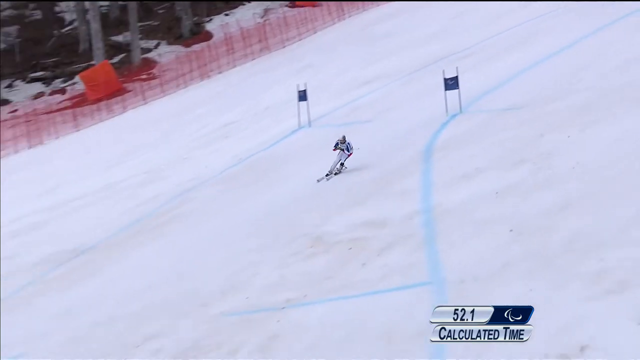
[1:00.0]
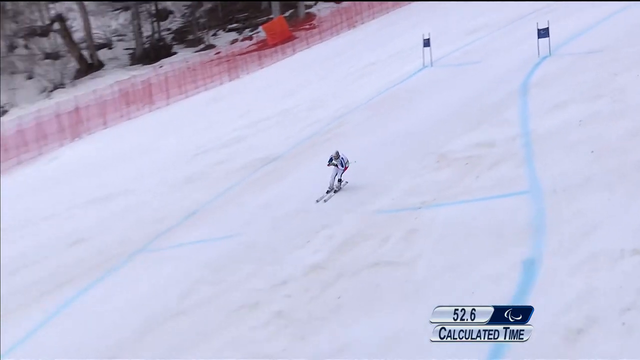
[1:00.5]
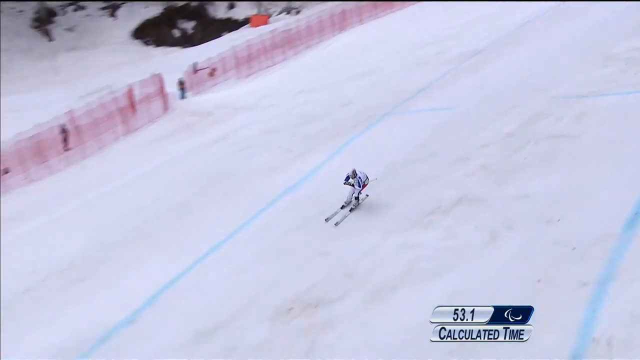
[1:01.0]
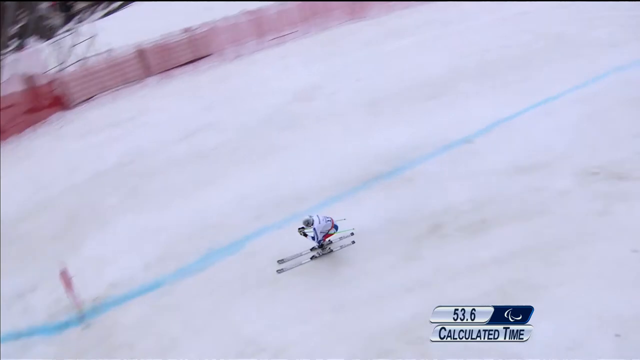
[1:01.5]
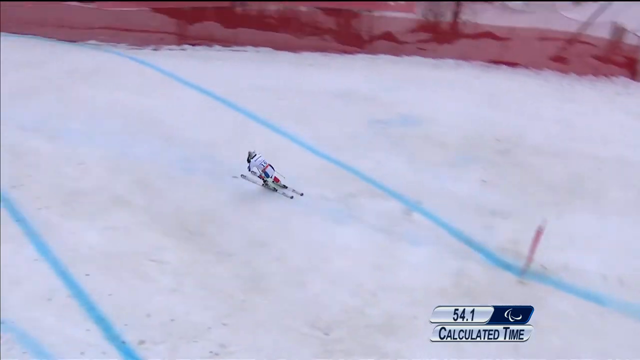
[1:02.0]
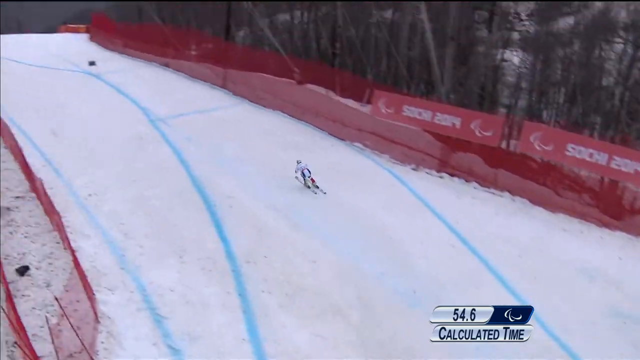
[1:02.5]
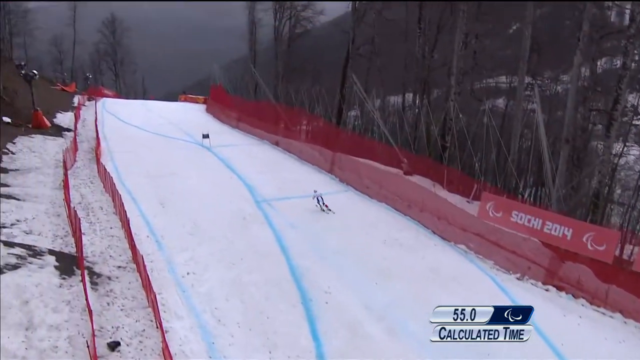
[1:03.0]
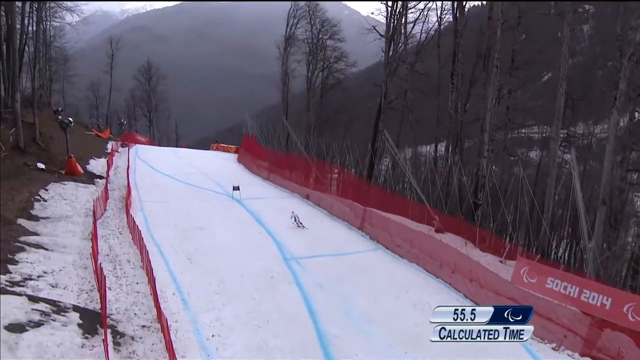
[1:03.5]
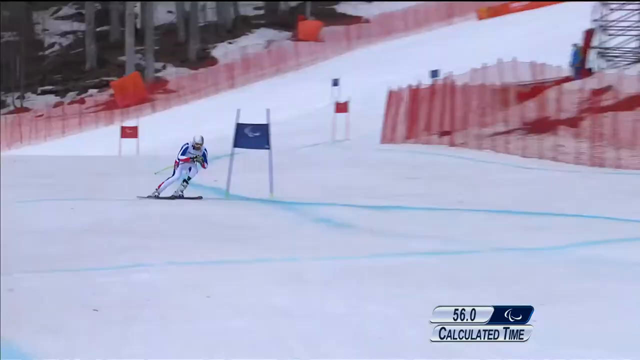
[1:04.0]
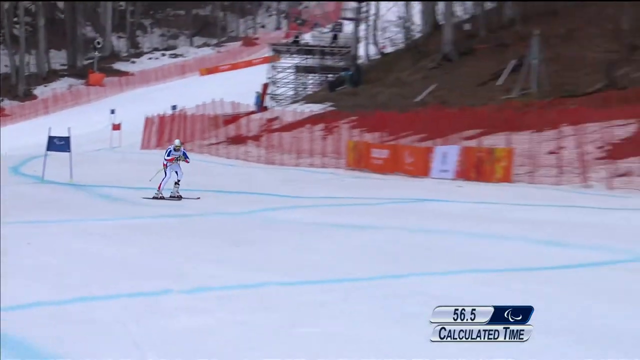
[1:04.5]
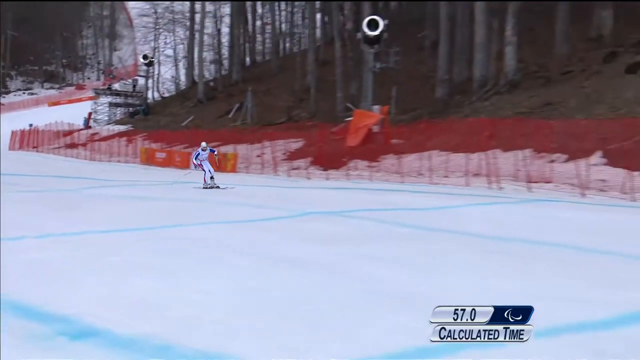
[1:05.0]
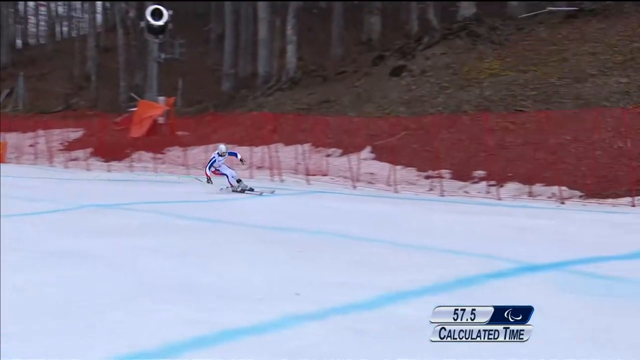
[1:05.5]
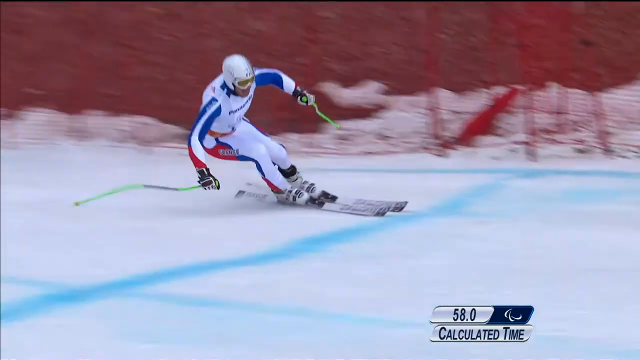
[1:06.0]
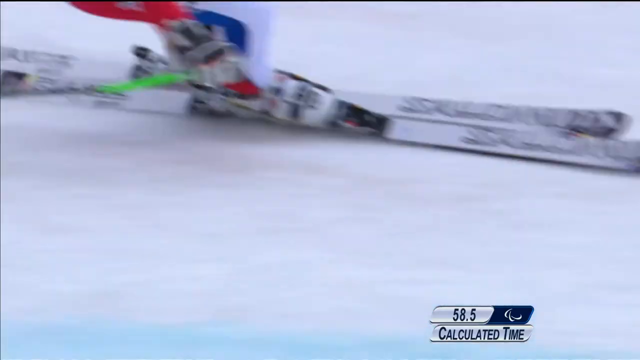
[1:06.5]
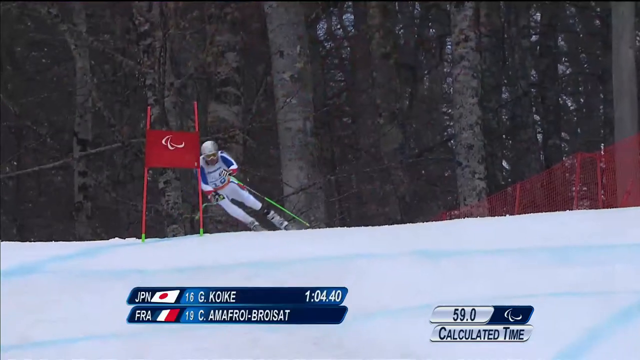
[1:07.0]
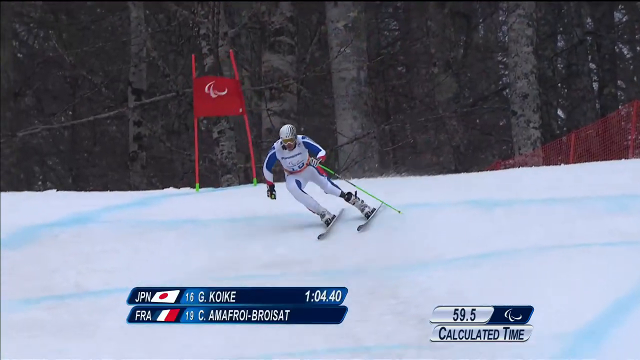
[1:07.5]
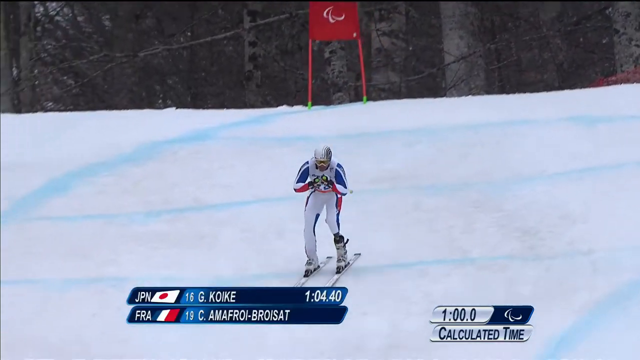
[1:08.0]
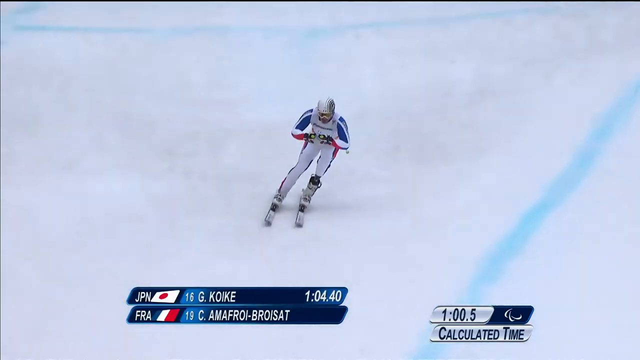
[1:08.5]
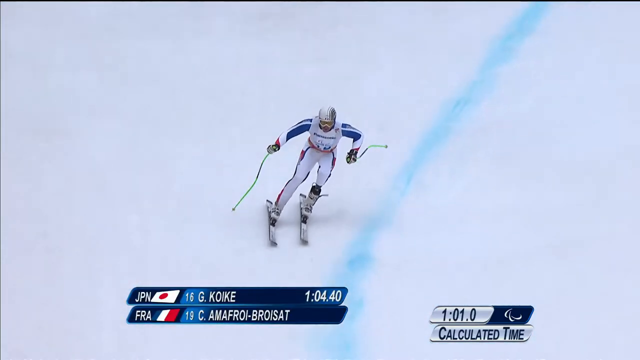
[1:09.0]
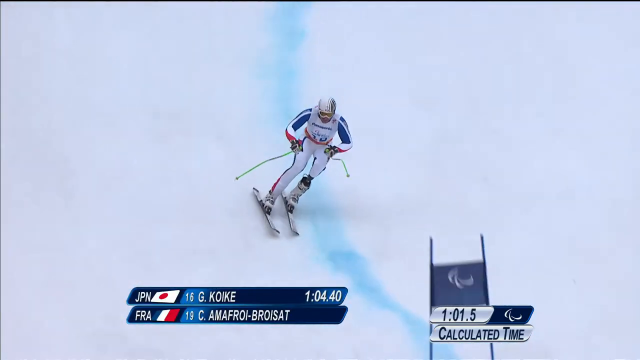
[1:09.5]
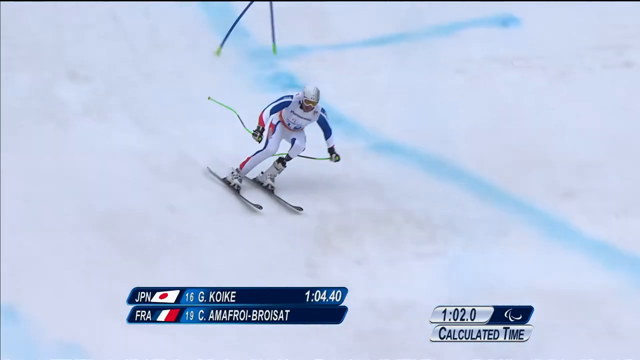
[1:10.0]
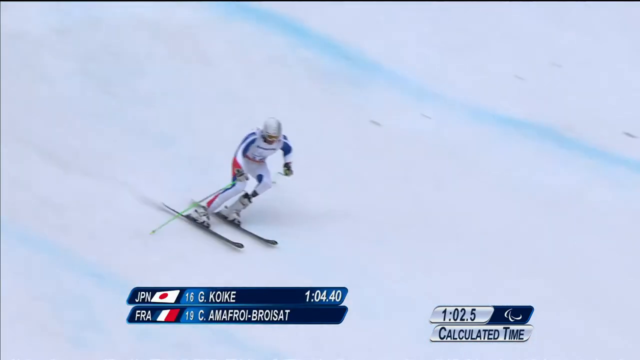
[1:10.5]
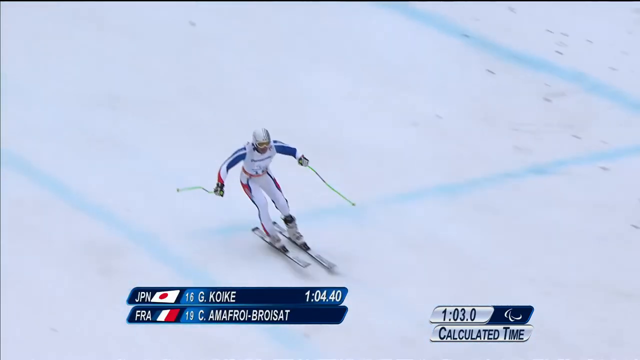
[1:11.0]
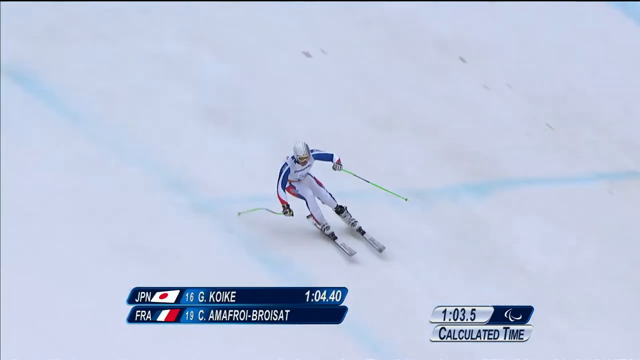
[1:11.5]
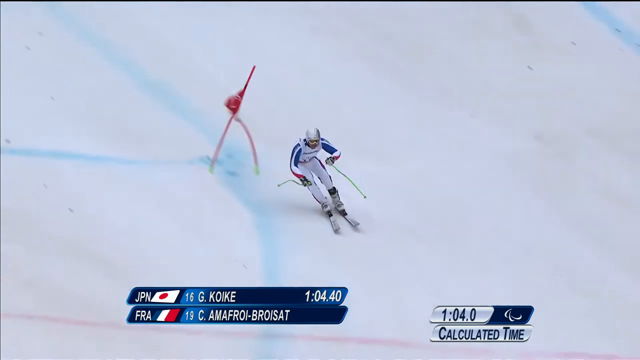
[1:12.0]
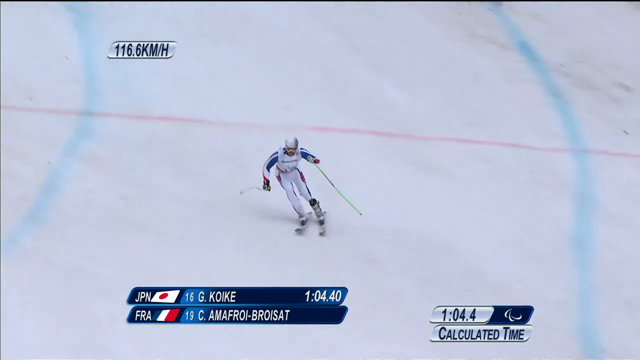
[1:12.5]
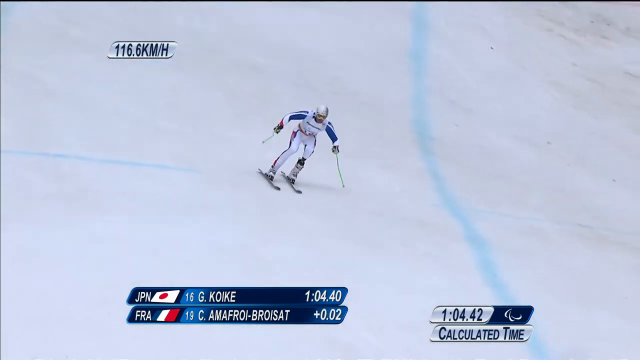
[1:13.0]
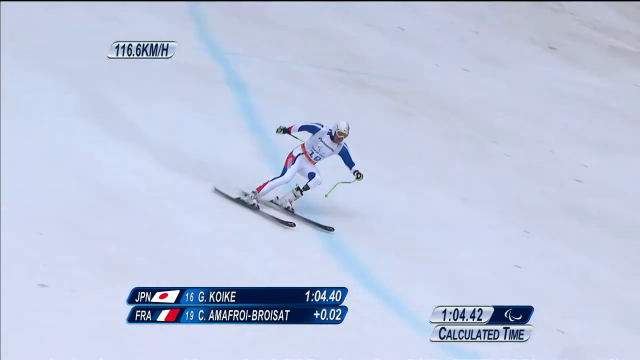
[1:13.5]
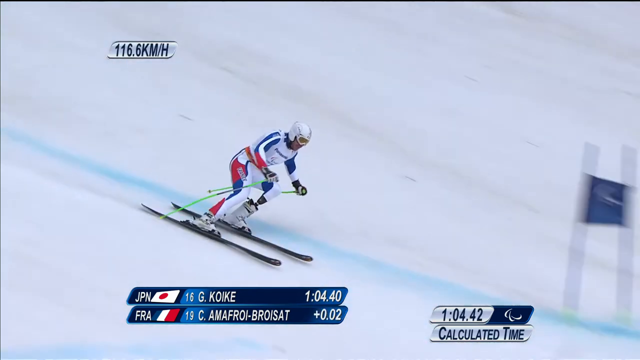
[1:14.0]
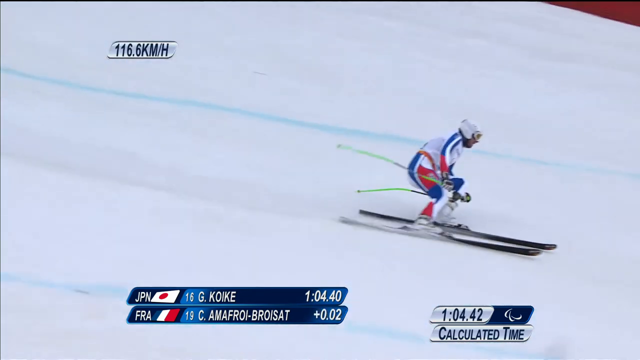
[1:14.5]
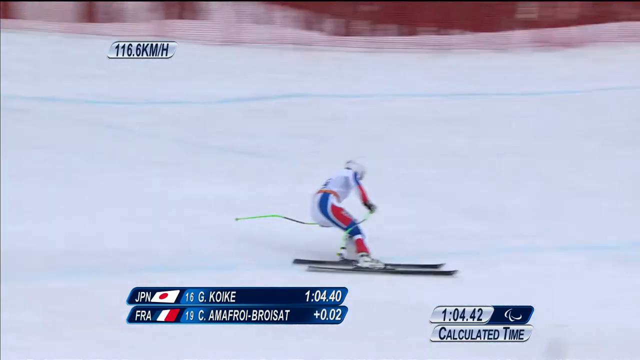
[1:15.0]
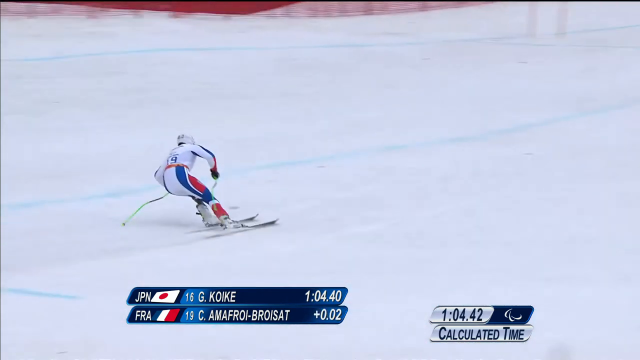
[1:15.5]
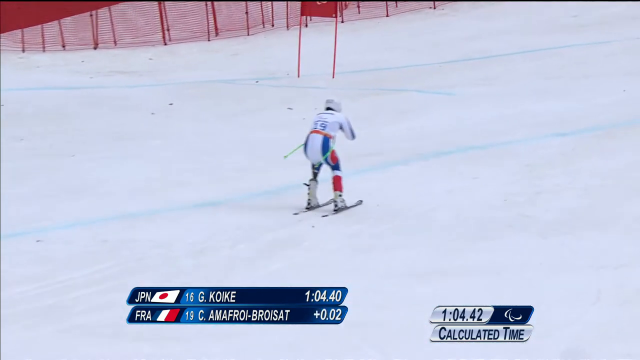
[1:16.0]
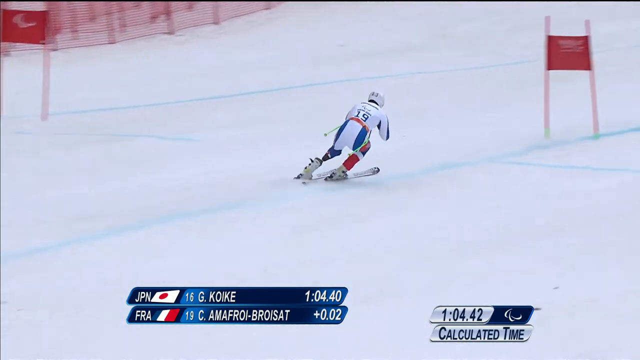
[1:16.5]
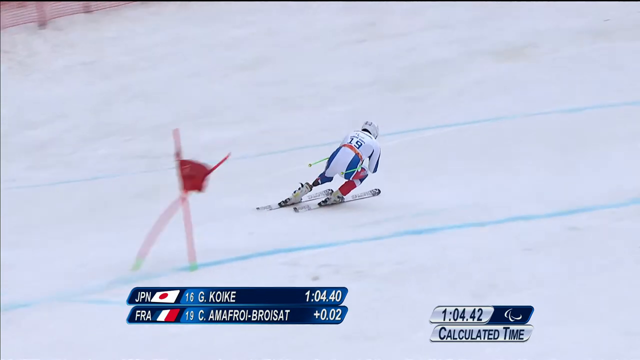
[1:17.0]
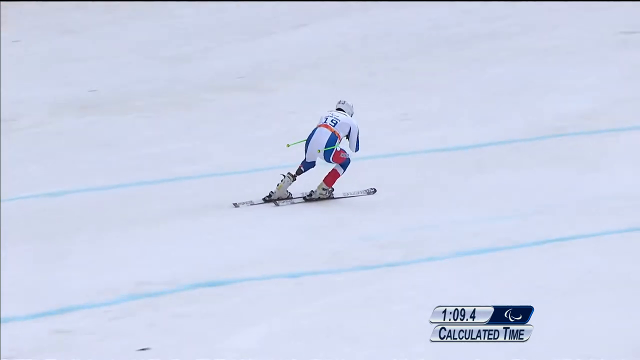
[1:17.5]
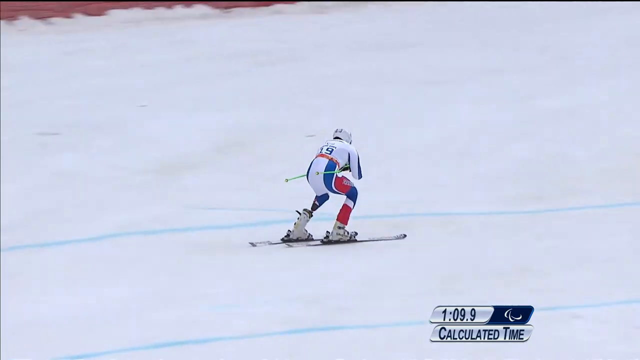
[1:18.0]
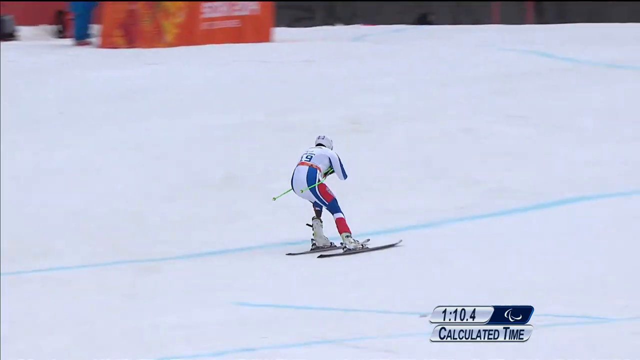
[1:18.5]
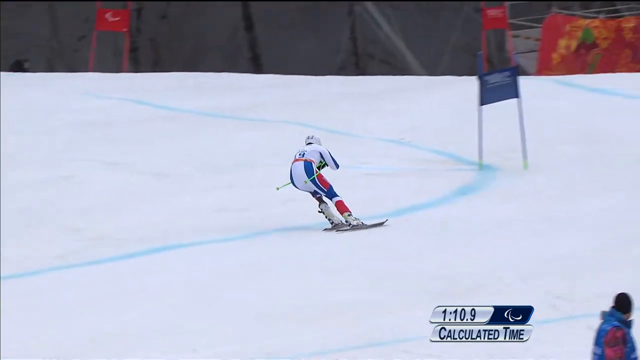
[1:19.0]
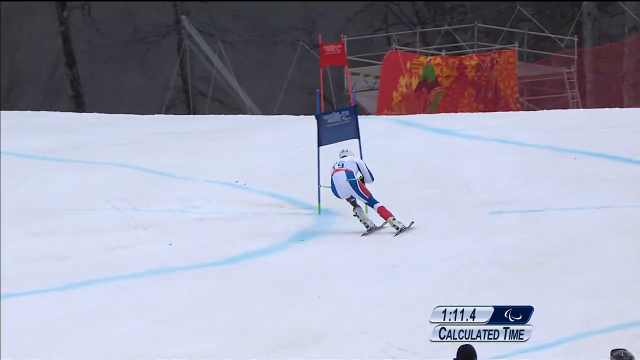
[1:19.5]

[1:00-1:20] He zooms between the two flags in his lane and goes even faster. His speed appears to be shown as 116.6 kilometers per hour. His time at this point seems to be around a minute, slightly slower than the leading contestant from Japan: Japan's time at this point is 104.4 seconds versus France's 1.04.42 seconds. Near the end of the shot, he appears to go slightly out of bounds from the path, touching it and then going back in, possibly losing a little time there.